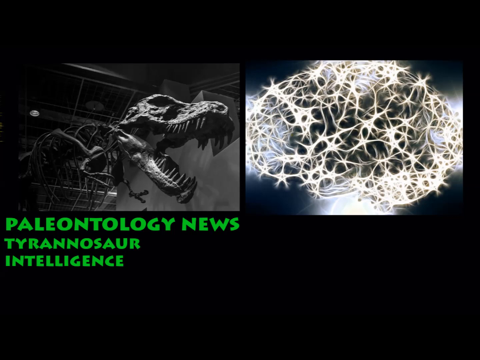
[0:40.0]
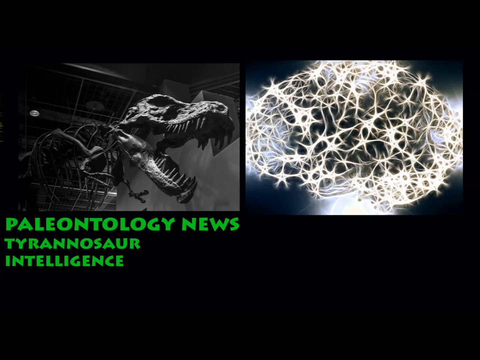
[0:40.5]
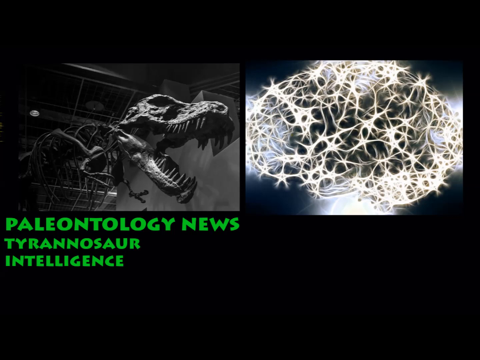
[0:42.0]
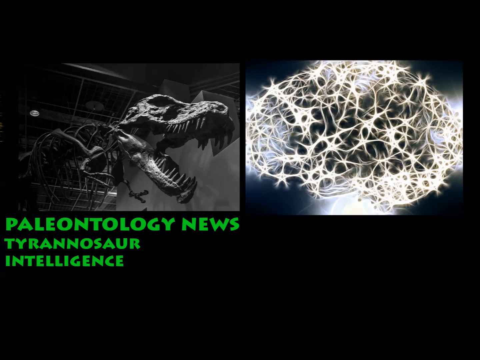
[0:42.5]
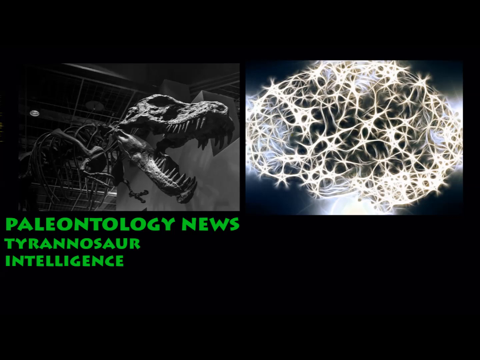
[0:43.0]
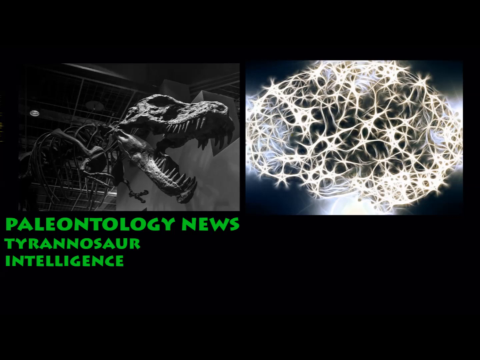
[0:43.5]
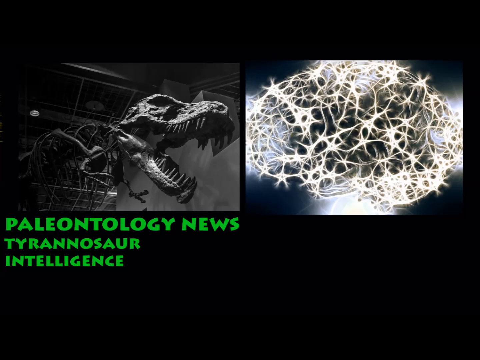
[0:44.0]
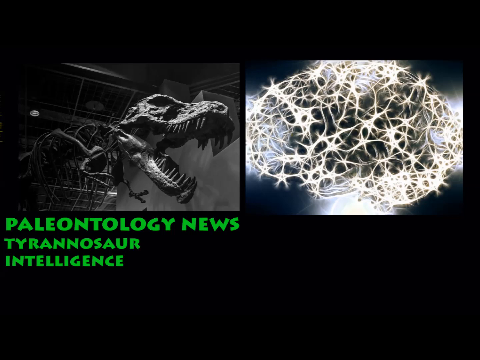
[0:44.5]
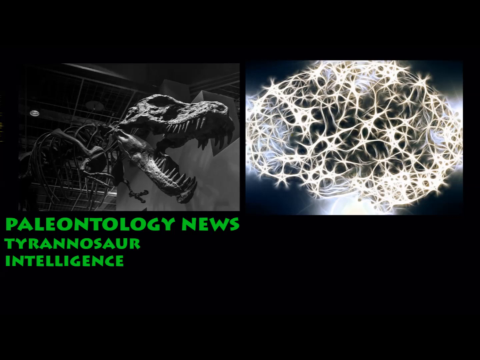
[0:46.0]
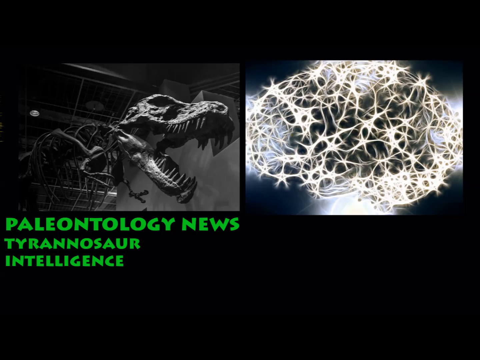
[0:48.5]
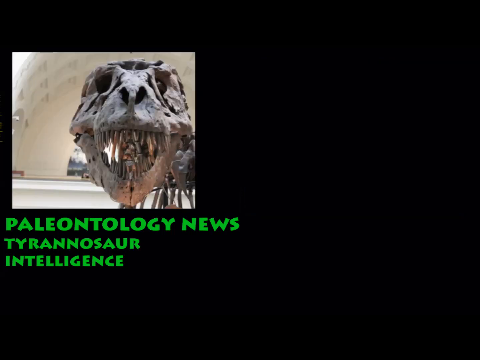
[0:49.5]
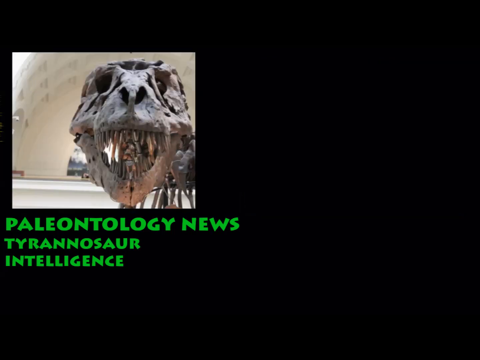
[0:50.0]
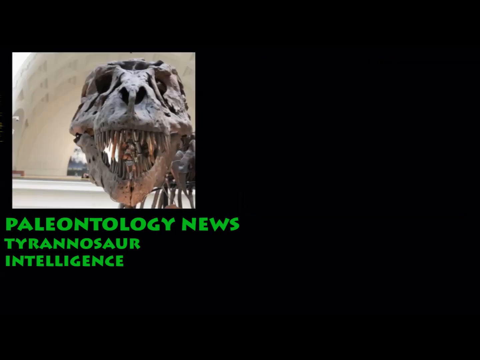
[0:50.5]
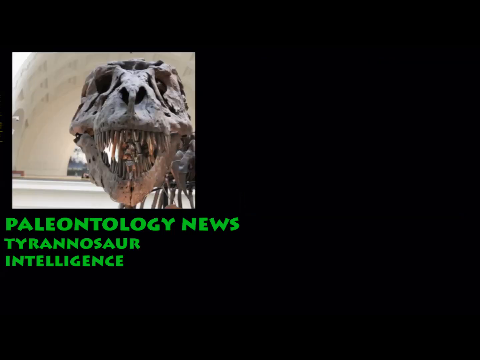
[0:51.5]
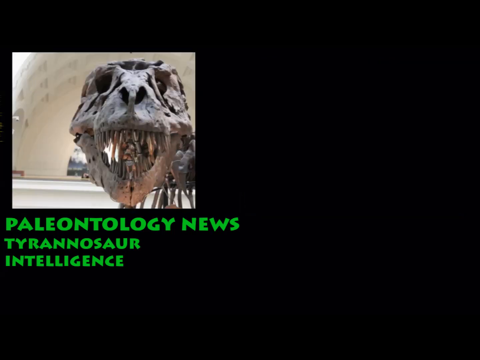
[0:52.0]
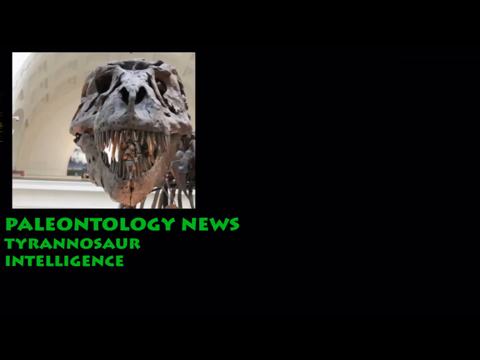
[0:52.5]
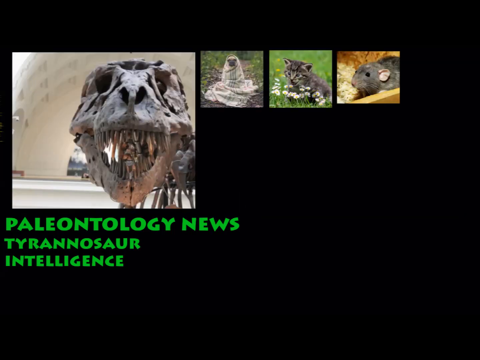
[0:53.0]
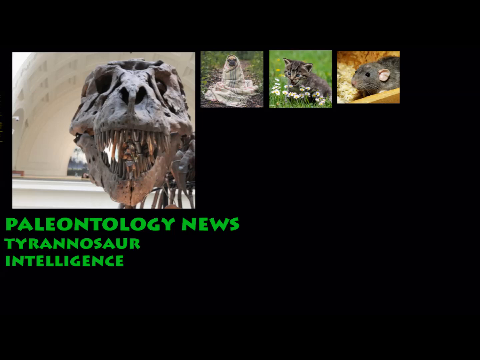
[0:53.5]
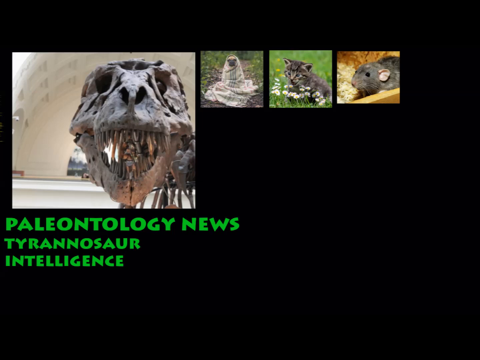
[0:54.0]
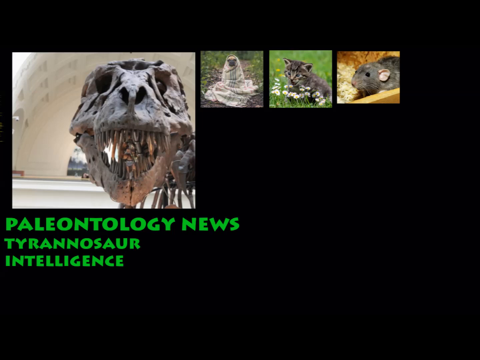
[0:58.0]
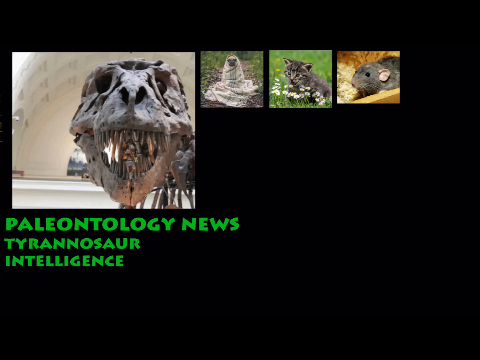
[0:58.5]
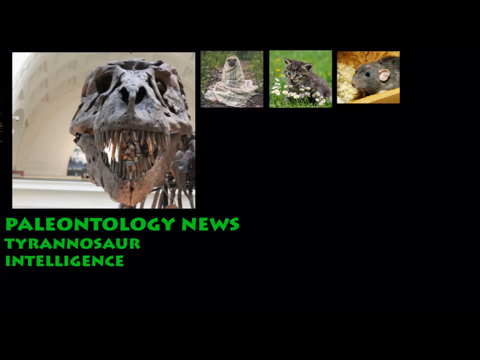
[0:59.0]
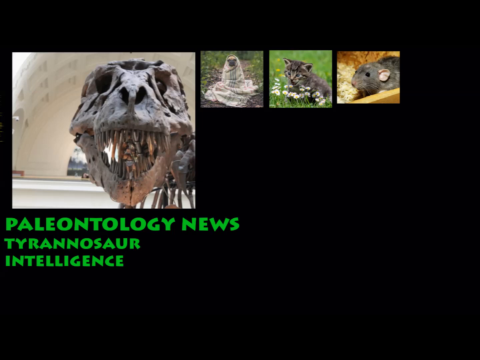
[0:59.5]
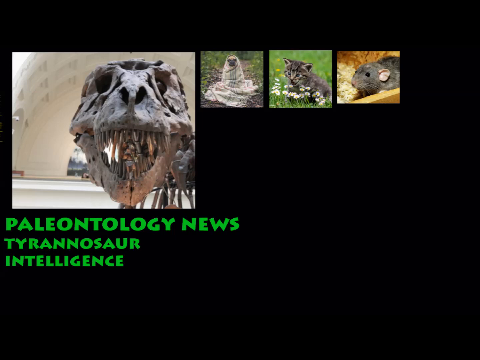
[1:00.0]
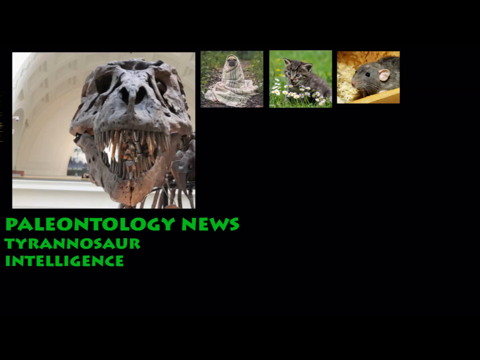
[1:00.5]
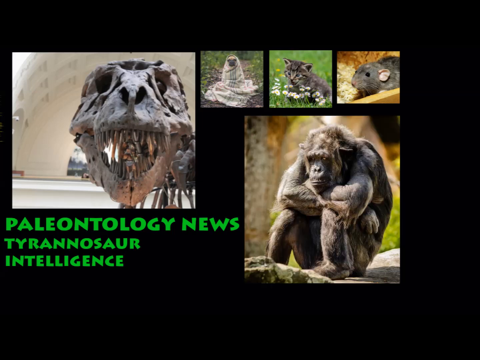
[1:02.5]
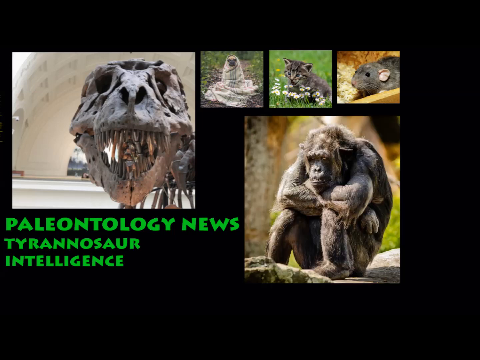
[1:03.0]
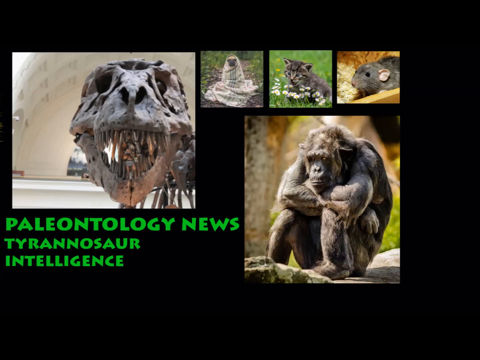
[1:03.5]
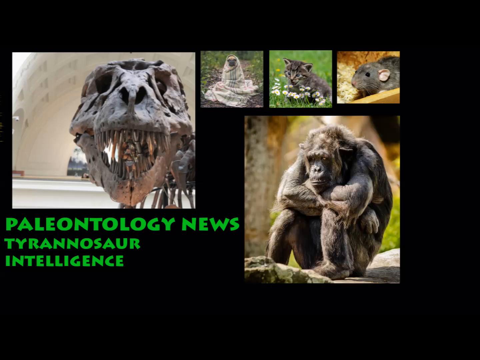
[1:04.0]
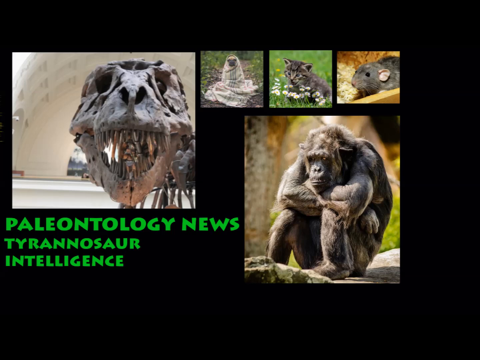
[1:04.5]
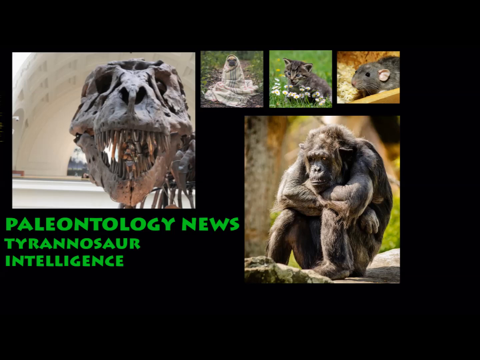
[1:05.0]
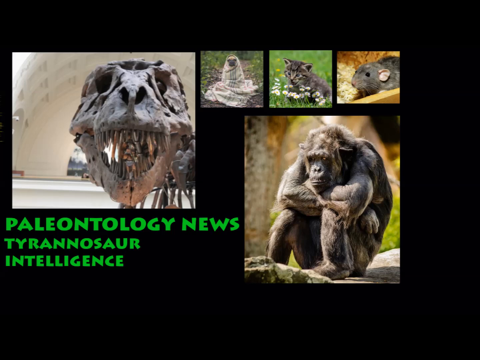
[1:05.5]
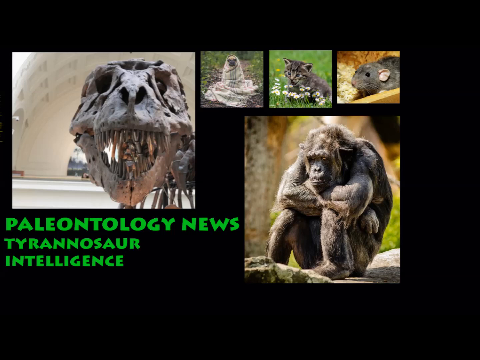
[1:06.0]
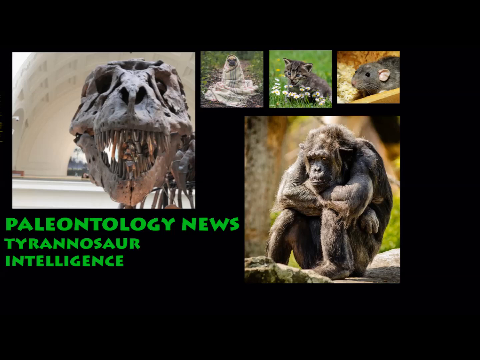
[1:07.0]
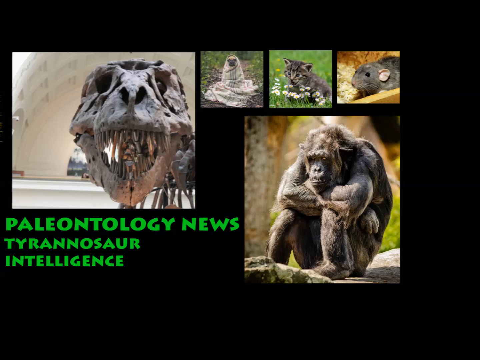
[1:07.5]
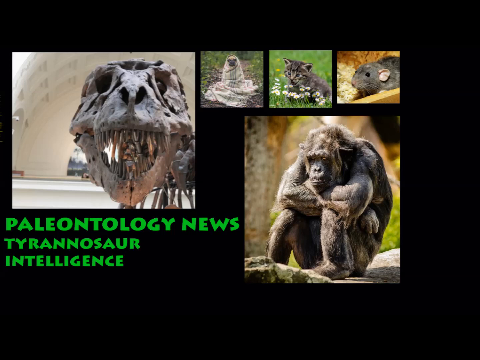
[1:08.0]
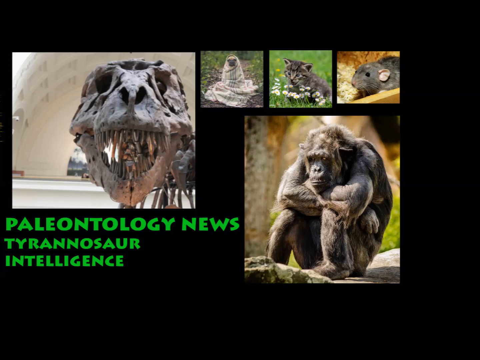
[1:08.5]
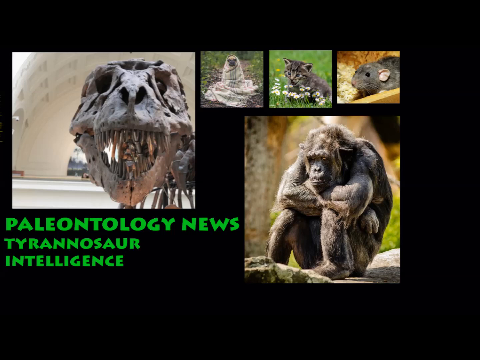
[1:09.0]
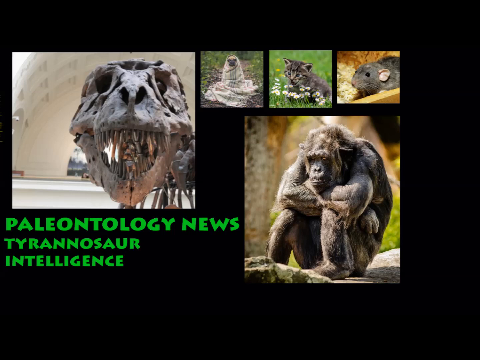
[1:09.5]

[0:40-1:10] A black-and-white picture of a tyrannosaur, particularly its skull and jaw, is shown, and to the right is a white net entwined with star shapes over what is perhaps a rock. Underneath the dinosaur picture is green text reading "paleontology news, tyrannosaur intelligence." The dinosaur picture then changes to a front view of the skeleton's head. In the right corner, three thumbnail clips appear: a white animal seated on the ground, a kitten sitting in a field of white flowers in the center, and a gray mouse on the right. A color picture of a gorilla, larger than a thumbnail, is then added, and the gorilla is seated between the thumbnail clips of the animals. The view then changes to the initial photograph of the tyrannosaur's skeletal face and the white webbing with stars entwined in it over a rock.